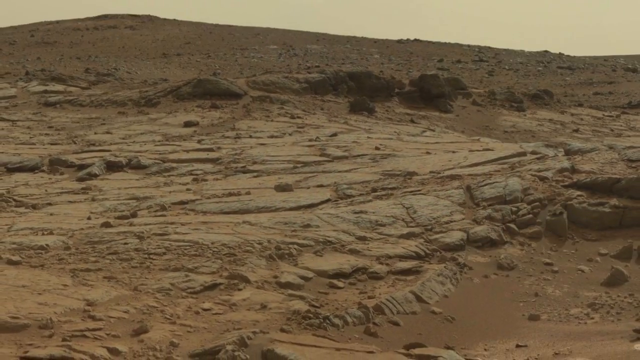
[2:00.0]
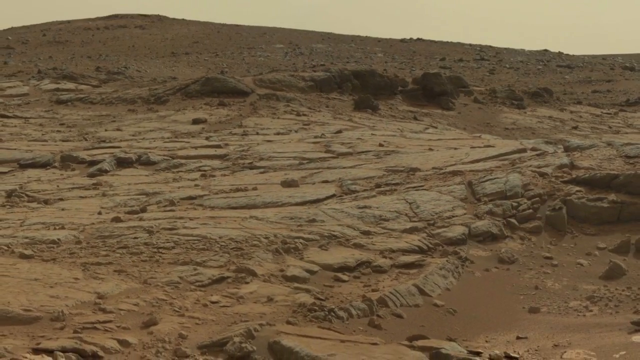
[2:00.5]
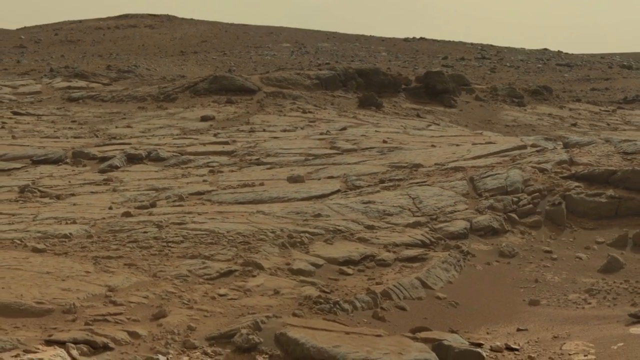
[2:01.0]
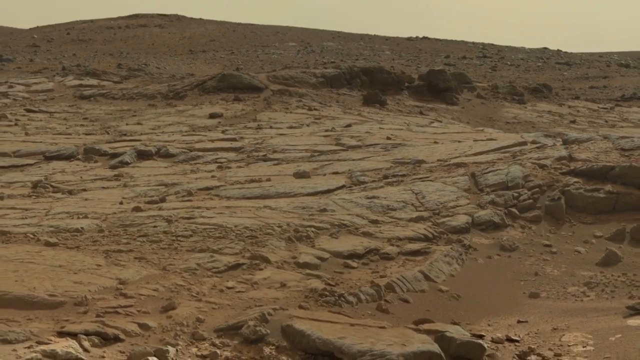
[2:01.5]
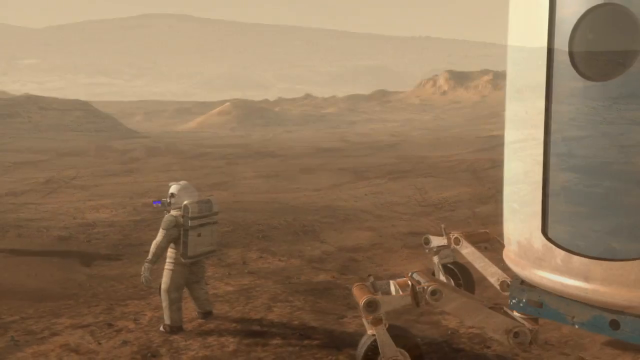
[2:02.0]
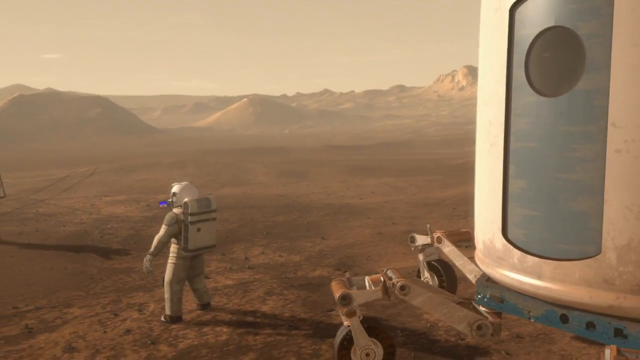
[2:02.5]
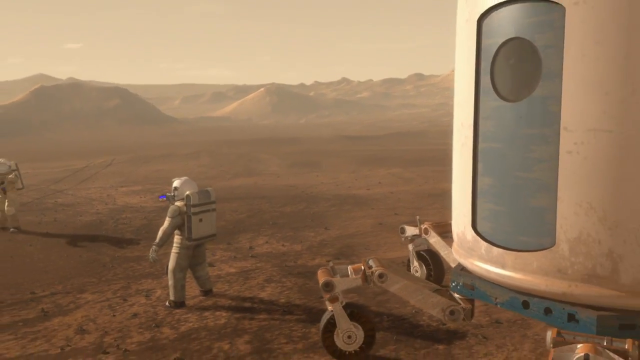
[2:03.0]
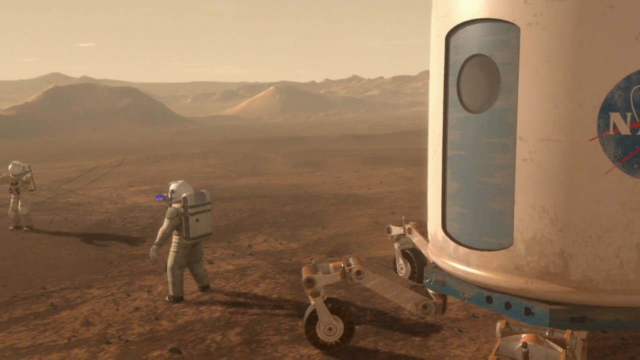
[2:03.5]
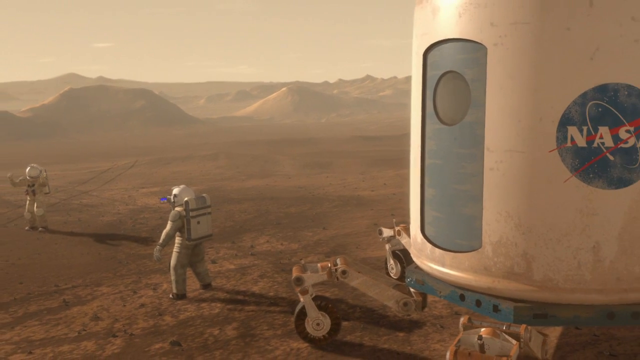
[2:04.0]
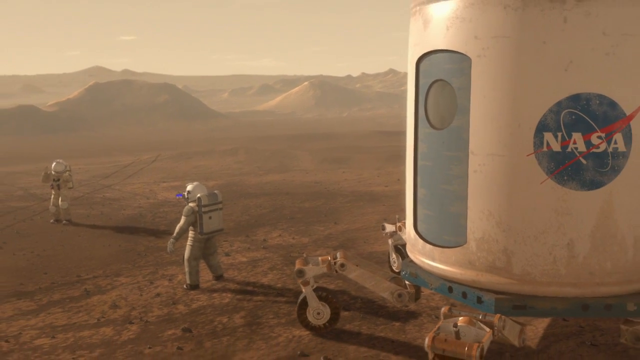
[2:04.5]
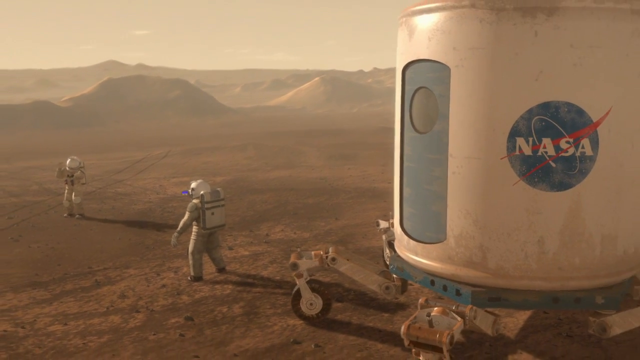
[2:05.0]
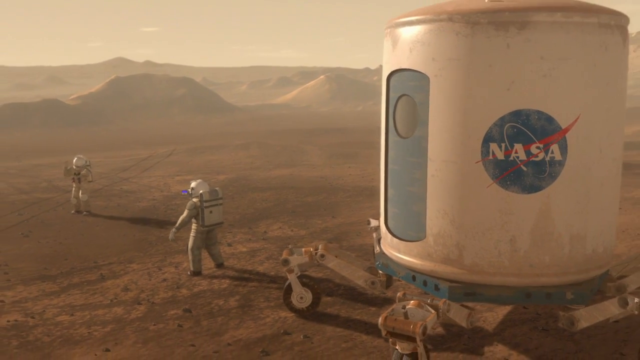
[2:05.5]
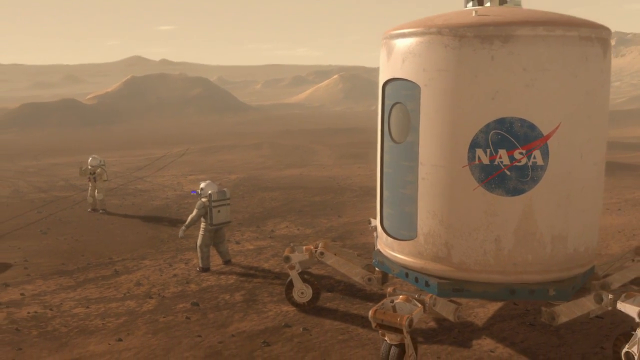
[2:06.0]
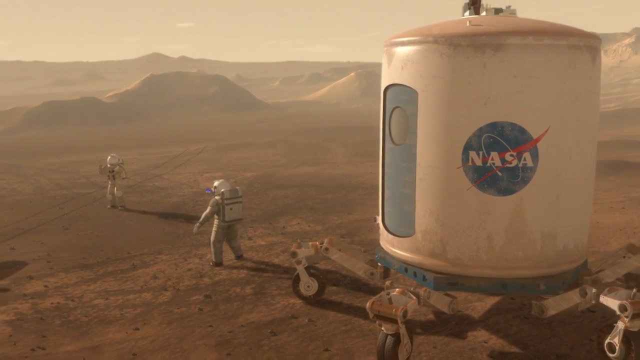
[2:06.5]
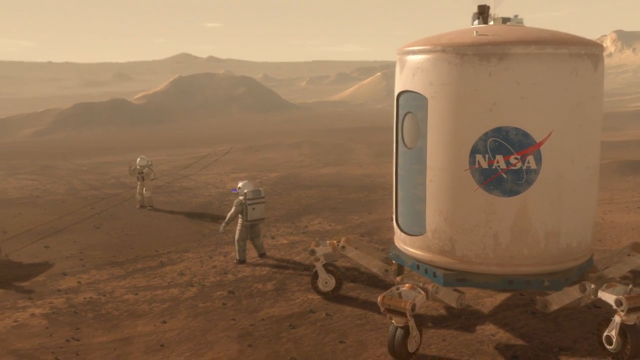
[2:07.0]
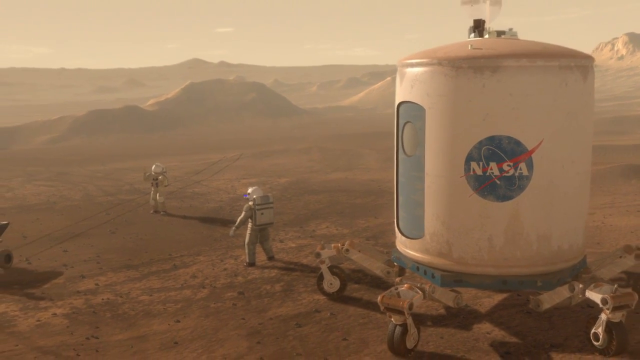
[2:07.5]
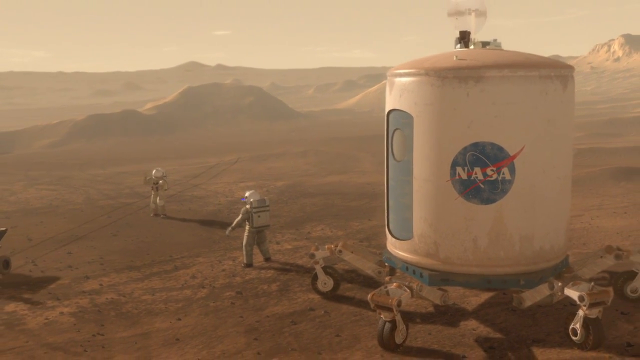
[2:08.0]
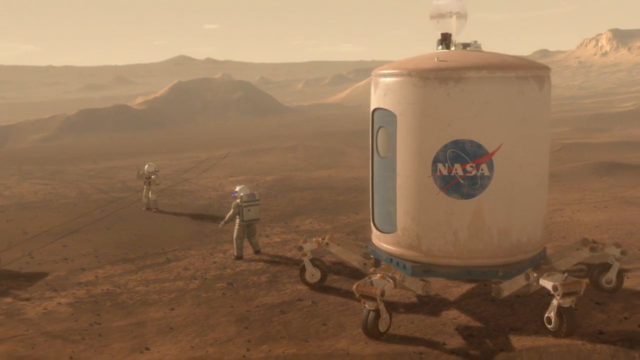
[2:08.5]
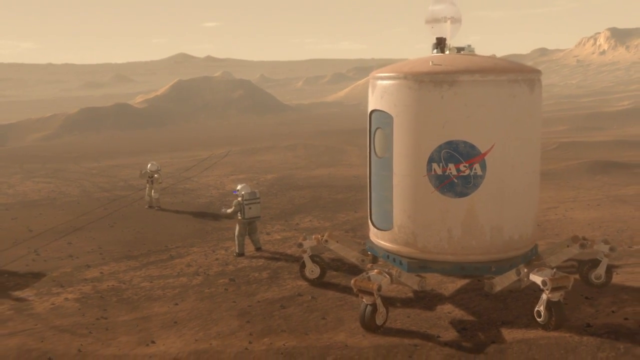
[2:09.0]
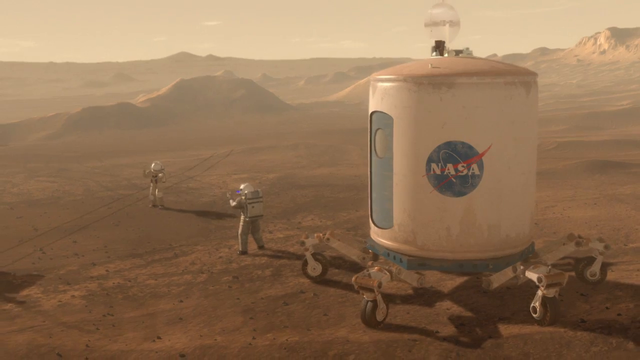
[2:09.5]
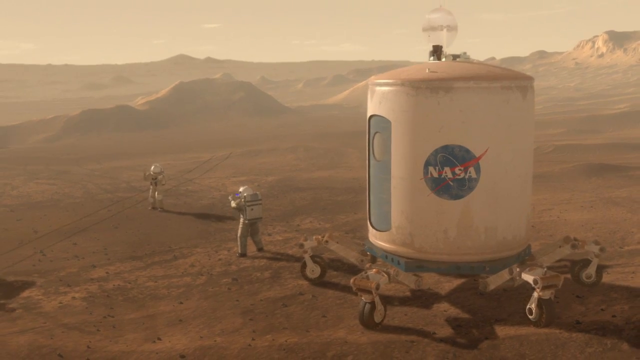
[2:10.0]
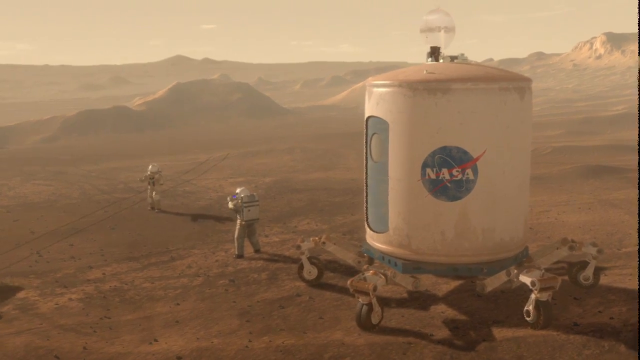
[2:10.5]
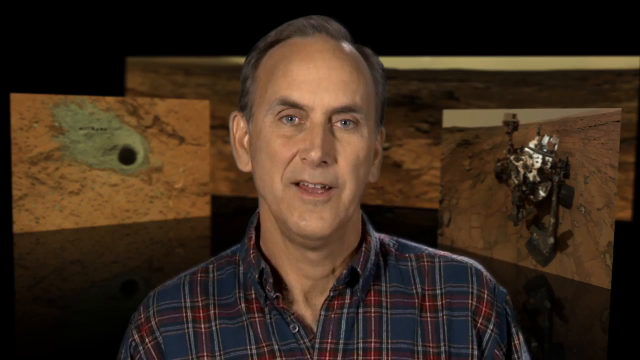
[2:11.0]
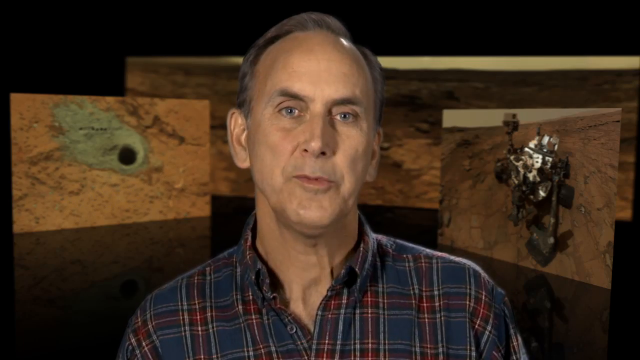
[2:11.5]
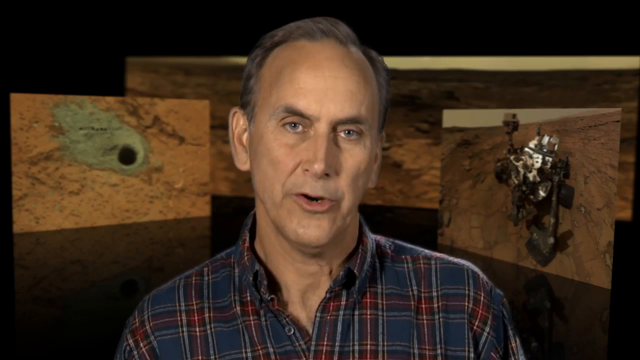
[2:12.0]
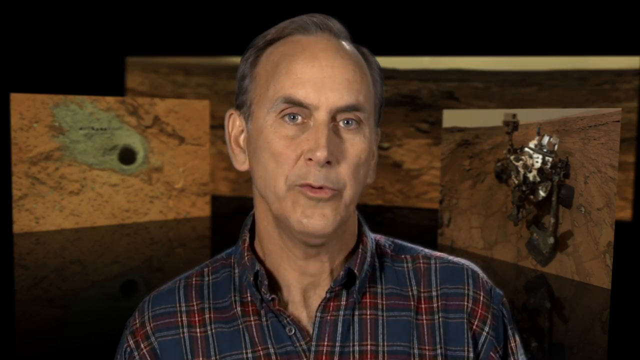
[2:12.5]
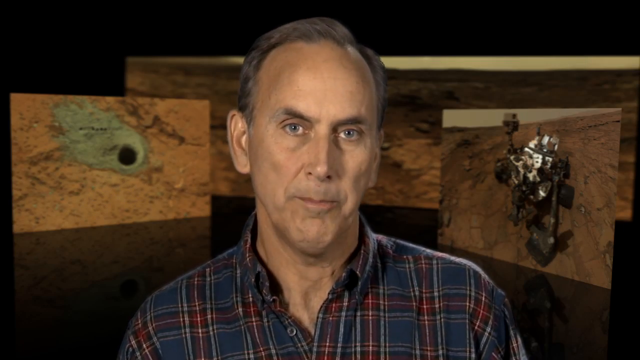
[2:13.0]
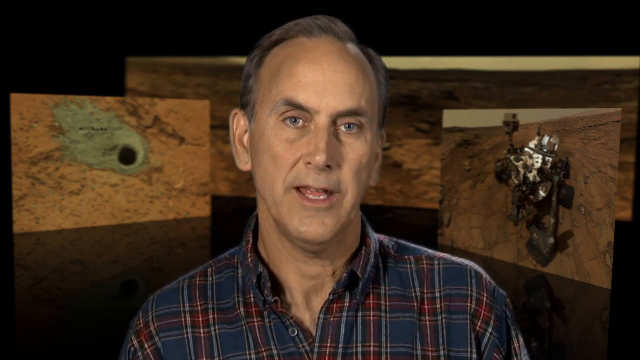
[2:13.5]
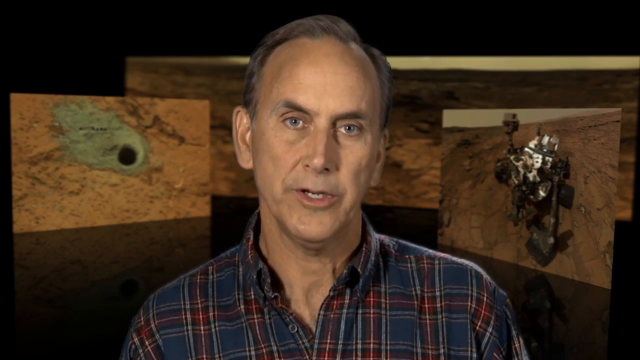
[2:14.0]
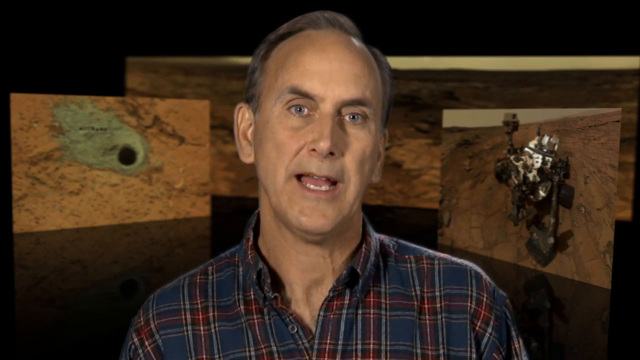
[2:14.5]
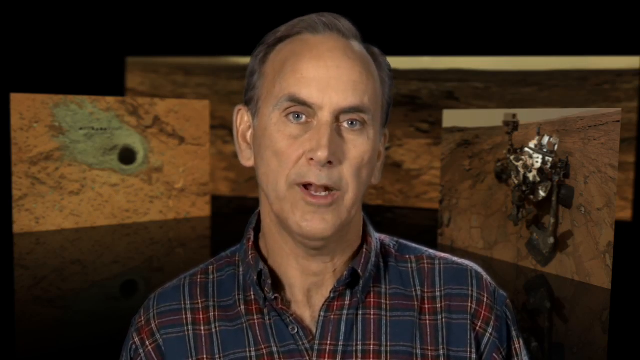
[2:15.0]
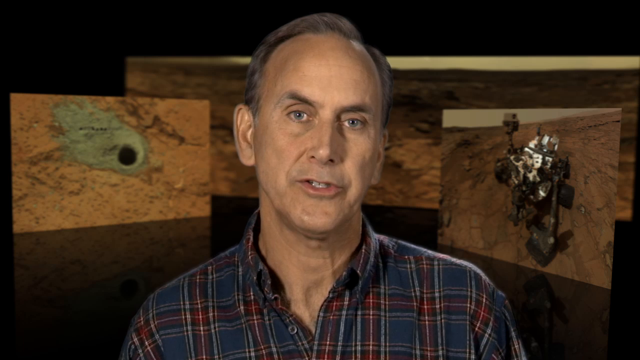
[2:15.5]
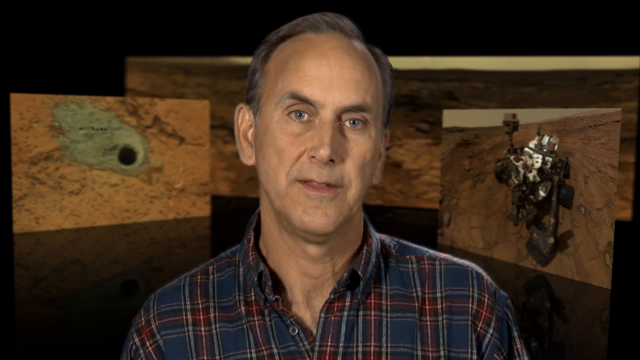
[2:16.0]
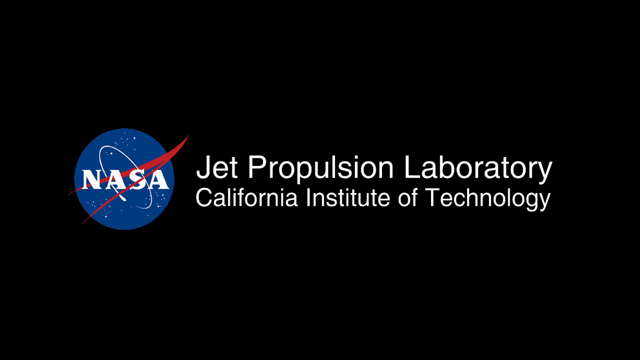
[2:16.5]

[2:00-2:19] The Jet Propulsion Laboratory is shown, with two astronauts, or maybe more, walking on Mars. There is apparently a space capsule with the words "NASA" written on it. Details identify the researcher as from the Jet Propulsion Laboratory, or California Institute of Technology. Two of the astronauts can be seen quite well, and there looks like some movement on the left side. The scene is a big, expansive picture of Mars with hills and mounds.